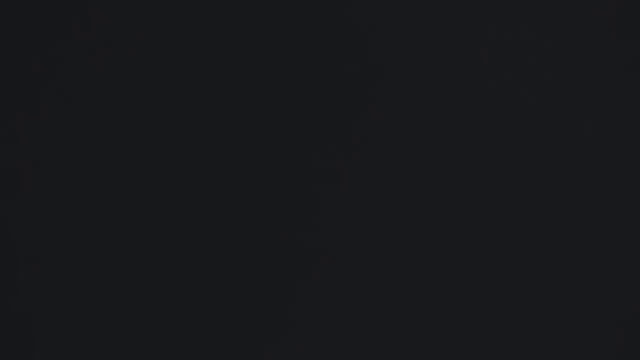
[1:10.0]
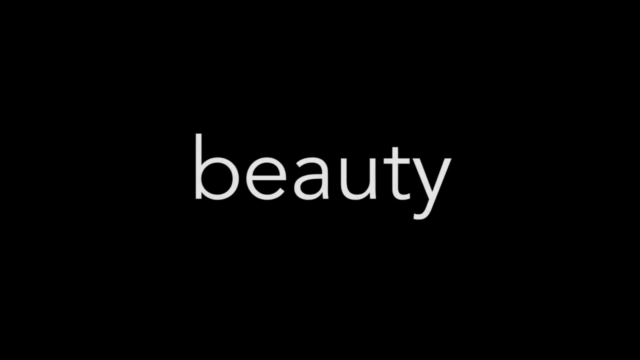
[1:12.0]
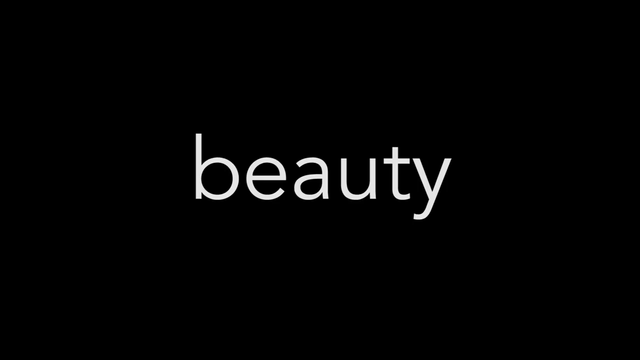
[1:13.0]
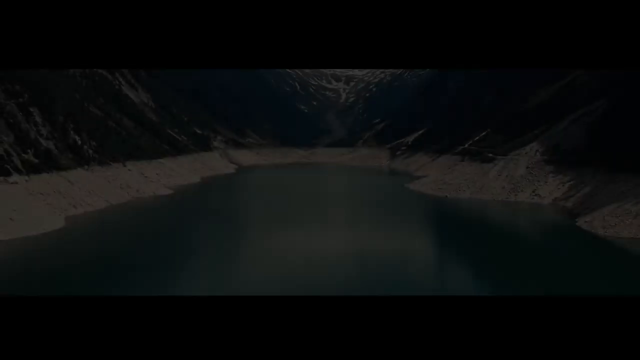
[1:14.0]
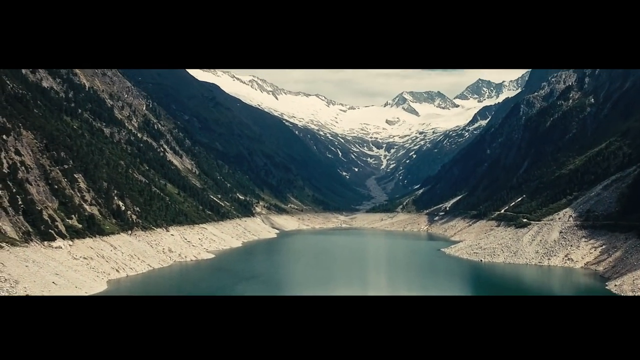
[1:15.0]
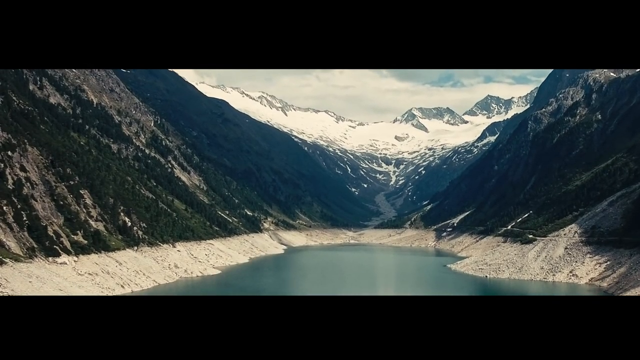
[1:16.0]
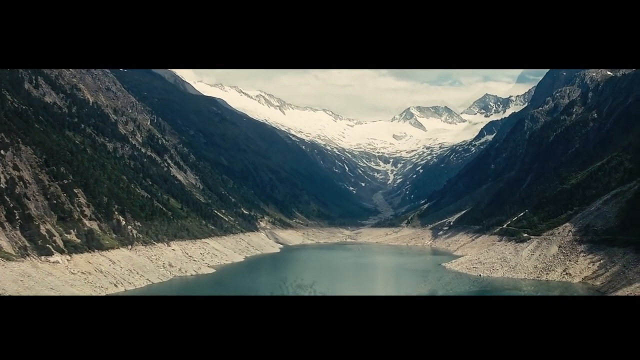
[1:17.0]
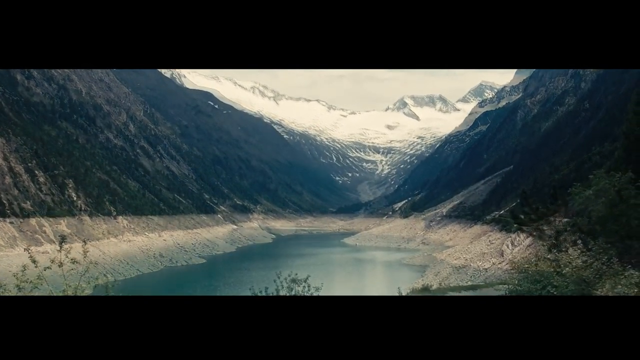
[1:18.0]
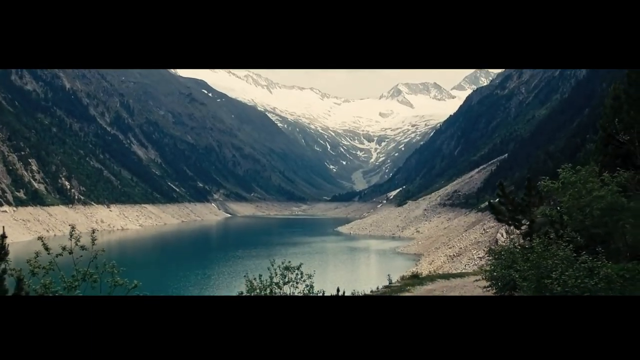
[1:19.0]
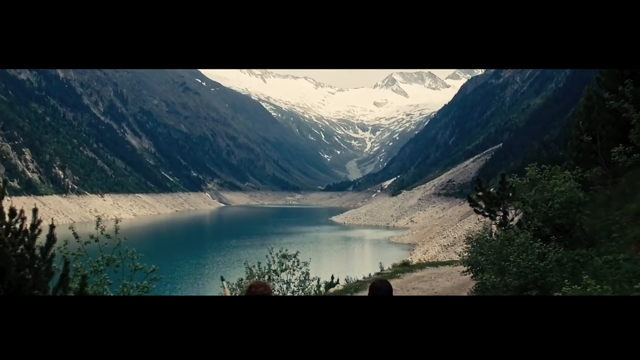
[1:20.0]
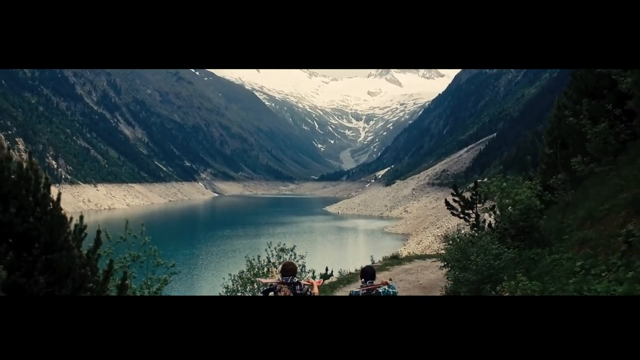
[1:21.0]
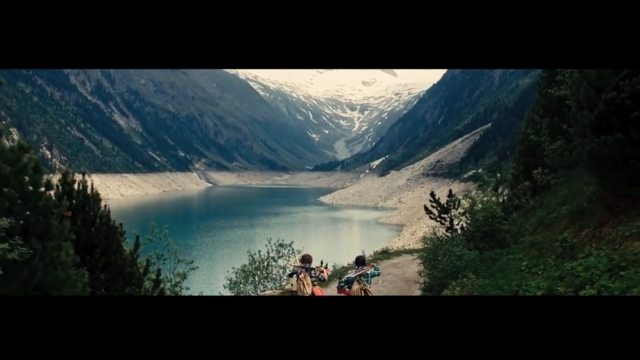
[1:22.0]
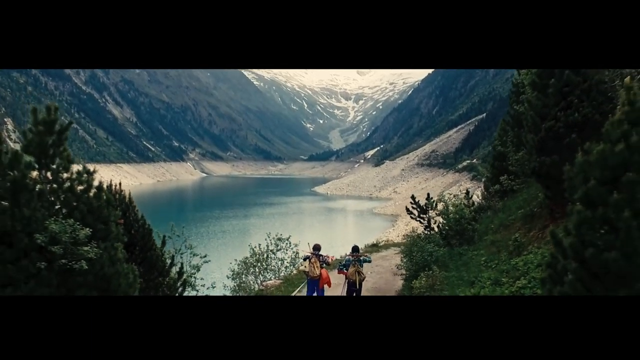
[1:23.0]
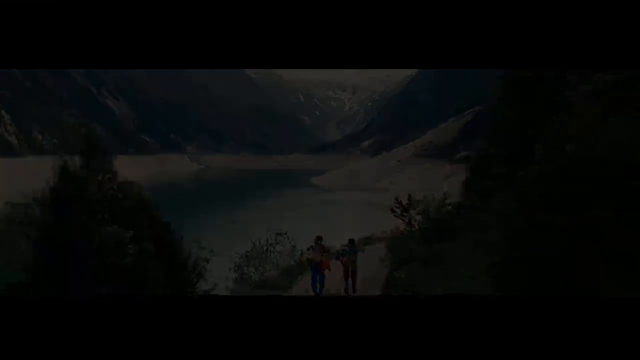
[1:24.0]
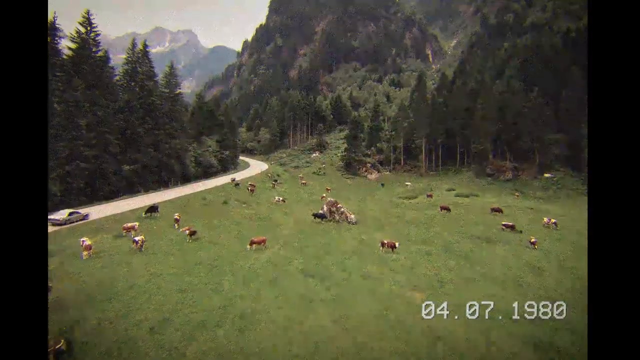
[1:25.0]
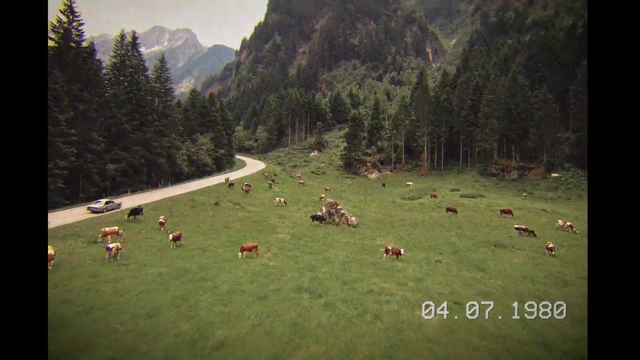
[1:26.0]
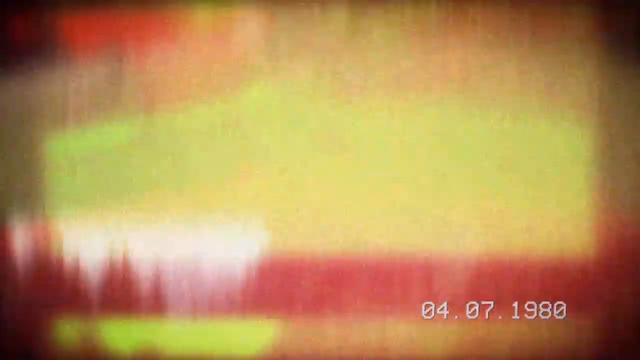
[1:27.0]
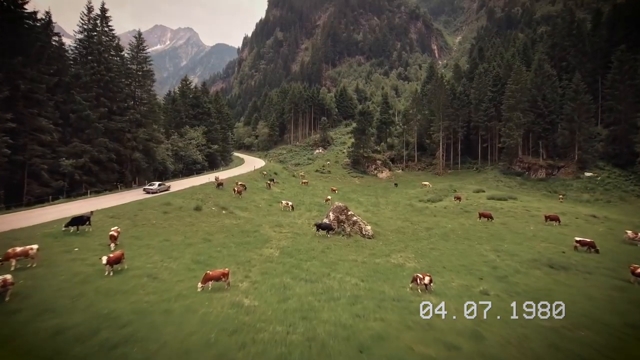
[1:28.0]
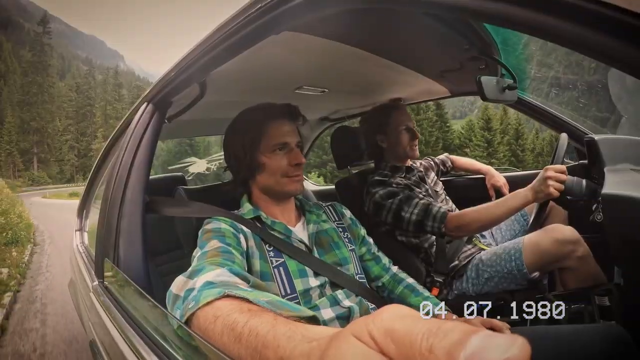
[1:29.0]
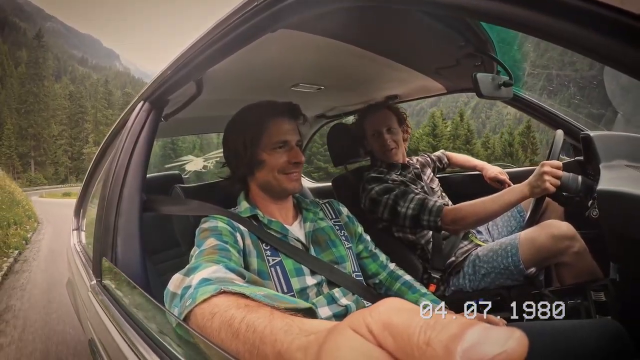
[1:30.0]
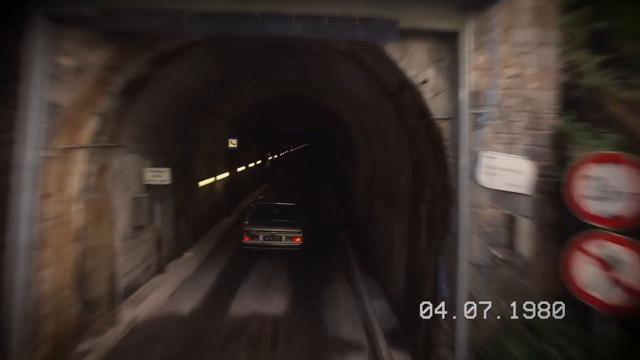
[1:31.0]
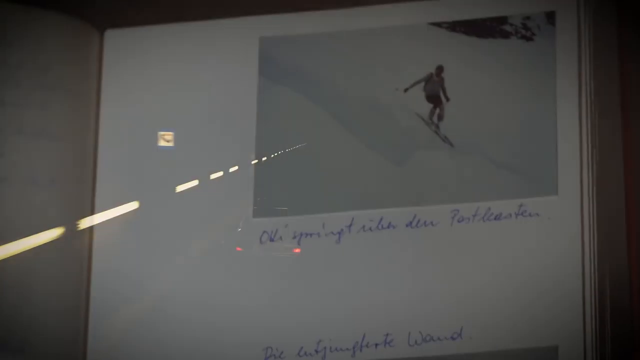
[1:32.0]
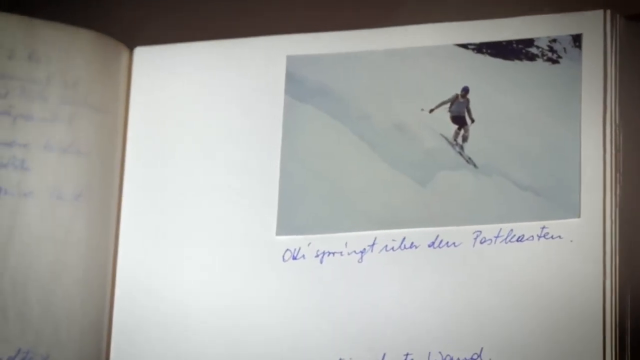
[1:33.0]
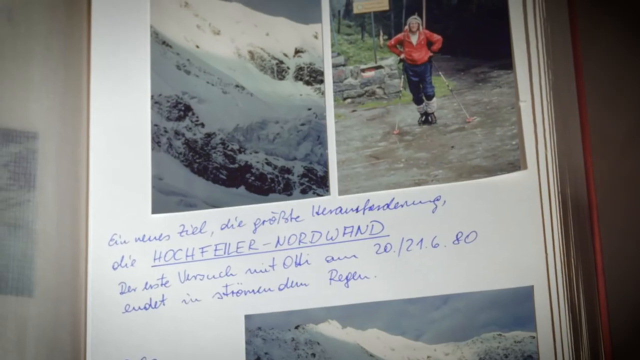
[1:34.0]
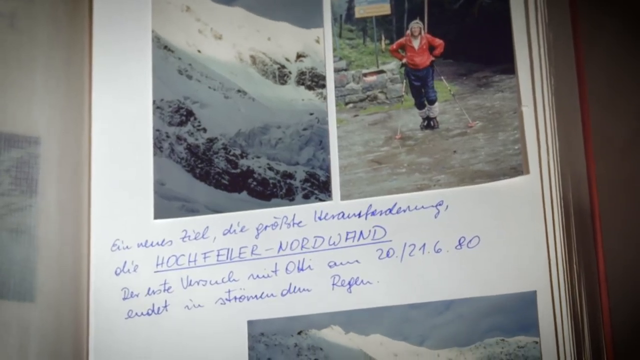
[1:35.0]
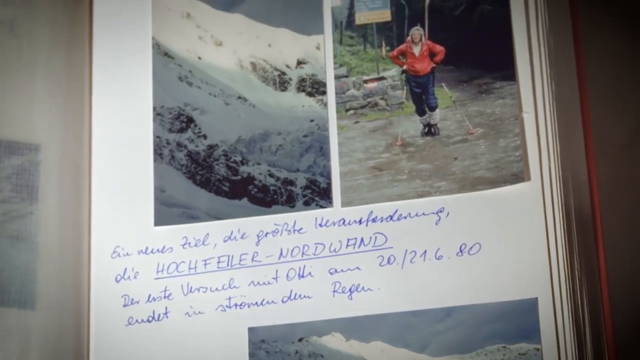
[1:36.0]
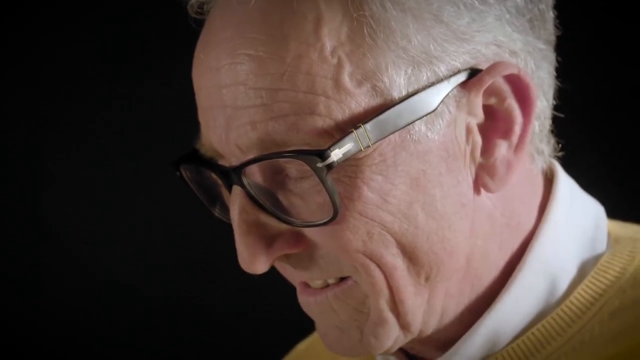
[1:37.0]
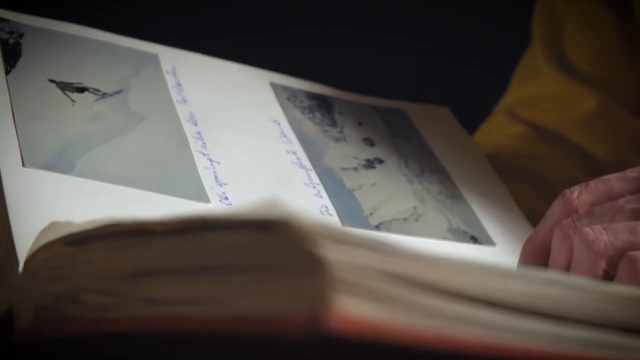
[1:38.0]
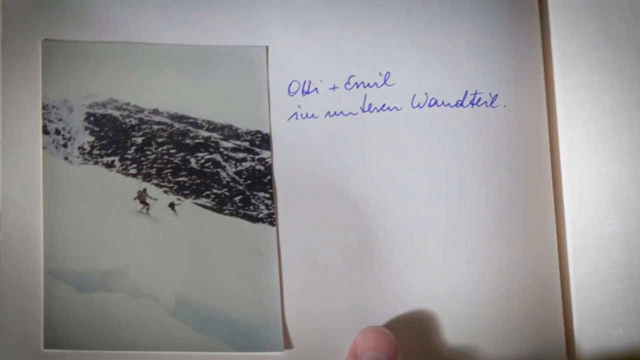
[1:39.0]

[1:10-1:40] Text appears in white on a black background. A lake is shown with the valley of a mountain covered in ice. The camera then moves backwards, deep into a forest. Two men are shown walking forward carrying backpacks. The scene switches to another area where cows are grazing next to a forest, with a road on which a car is passing by. The cattle seem to number about 80 or 100. The silver car seems to be driven by two men. The camera goes inside a tunnel. A transition follows back to the photo album, showing a man's picture and another picture of a woman.